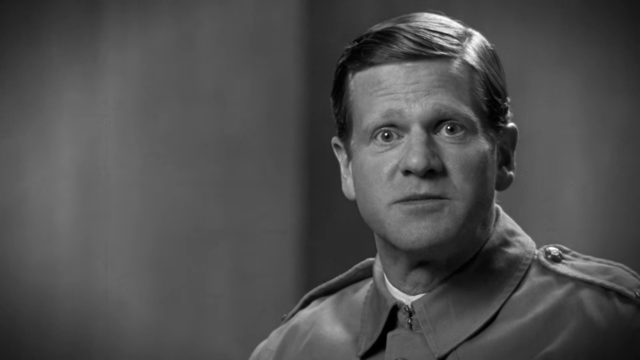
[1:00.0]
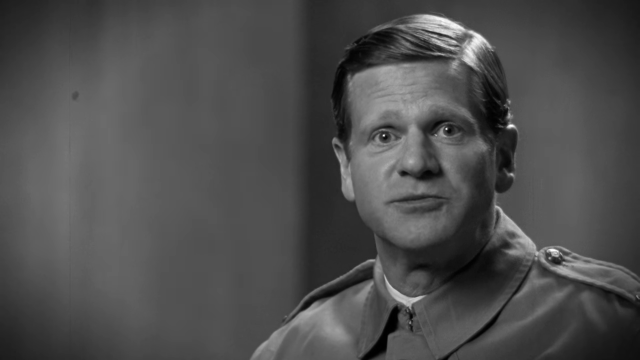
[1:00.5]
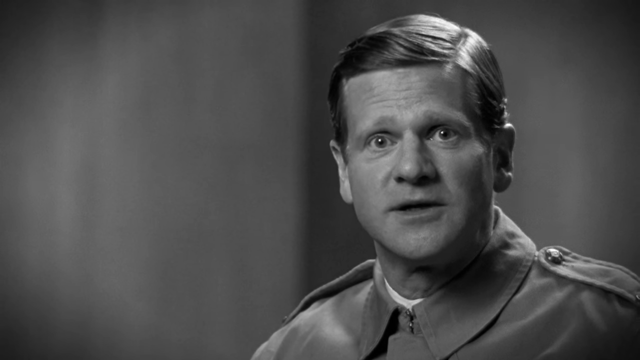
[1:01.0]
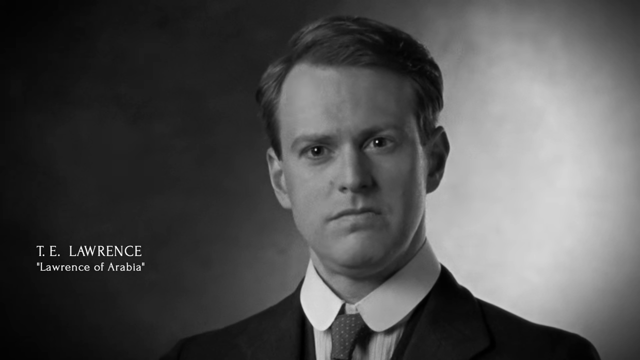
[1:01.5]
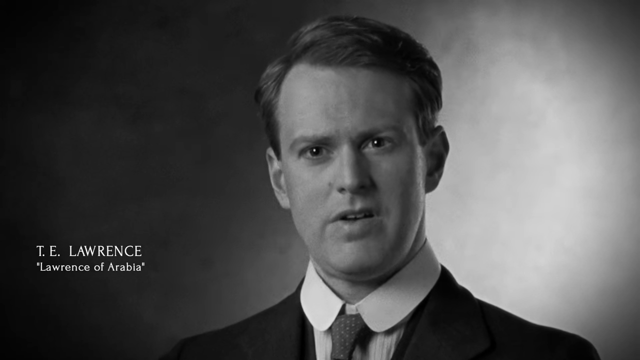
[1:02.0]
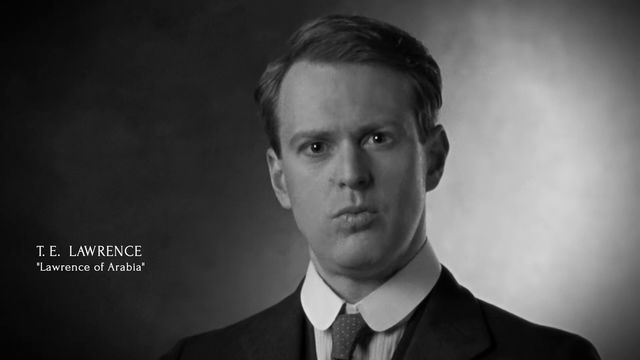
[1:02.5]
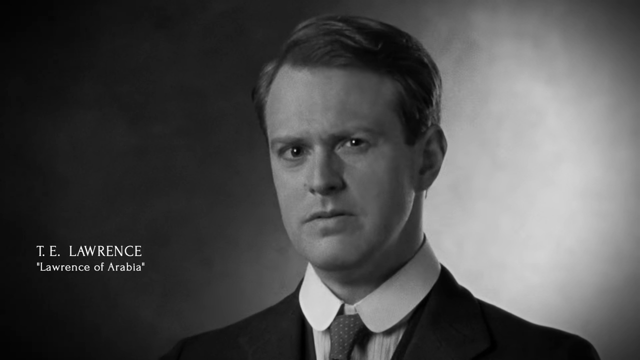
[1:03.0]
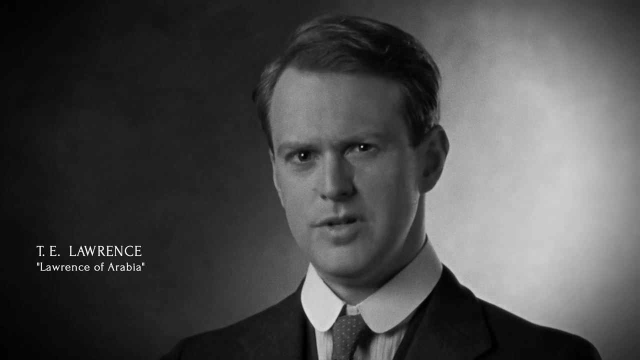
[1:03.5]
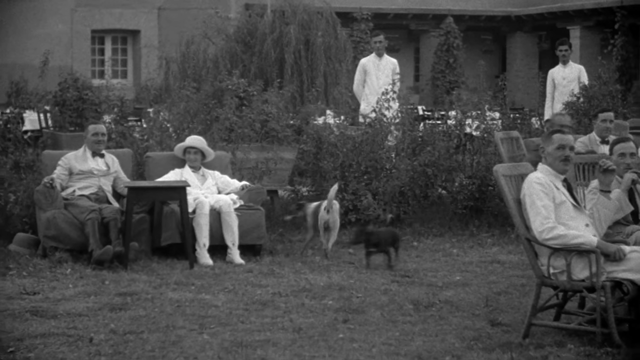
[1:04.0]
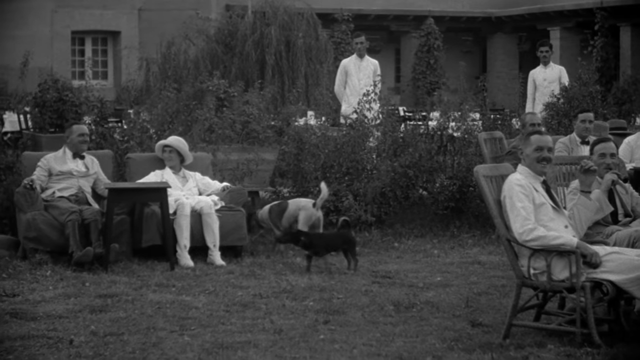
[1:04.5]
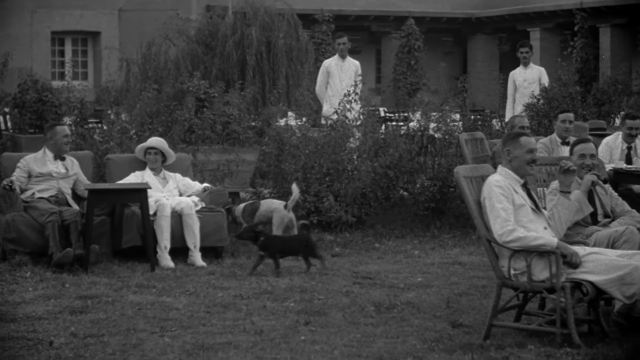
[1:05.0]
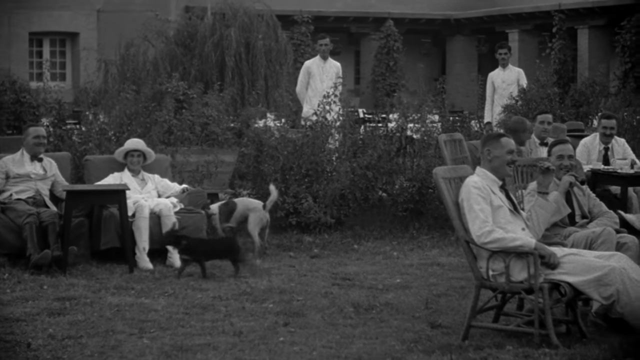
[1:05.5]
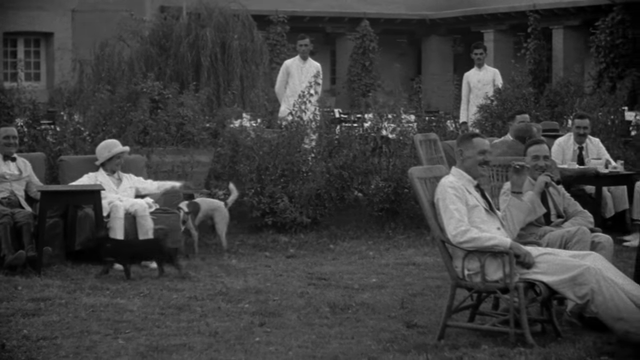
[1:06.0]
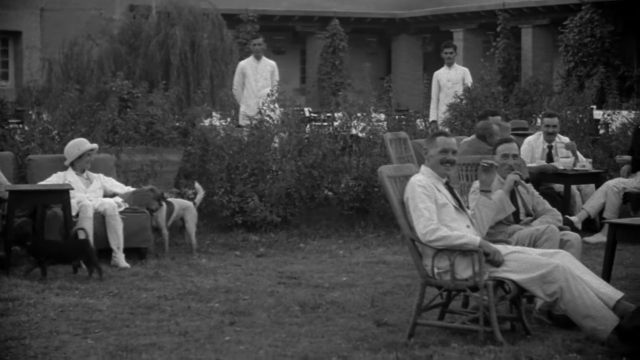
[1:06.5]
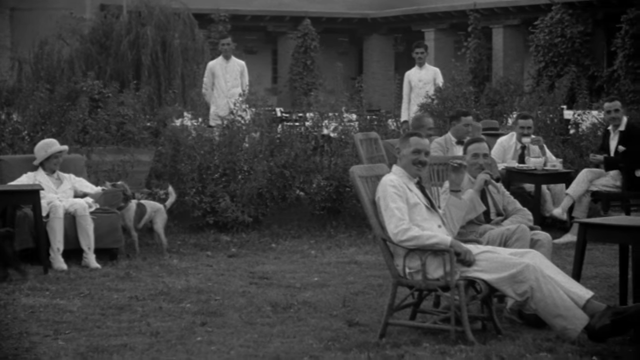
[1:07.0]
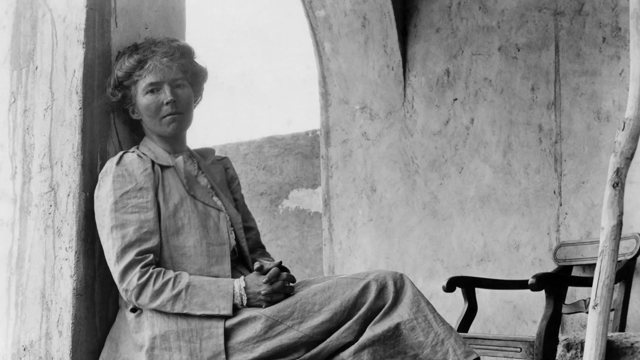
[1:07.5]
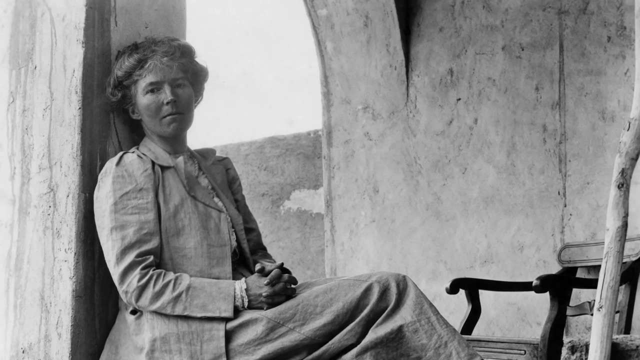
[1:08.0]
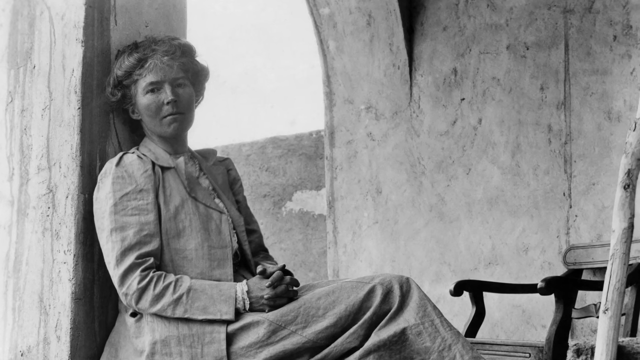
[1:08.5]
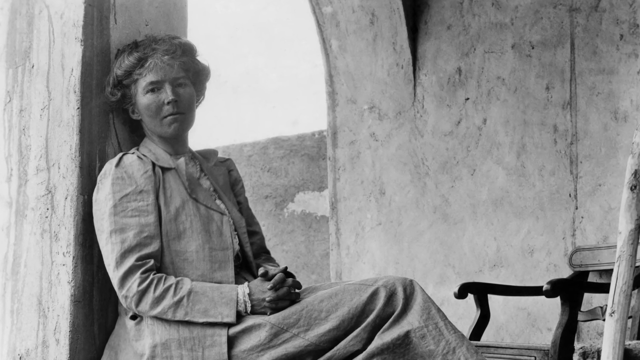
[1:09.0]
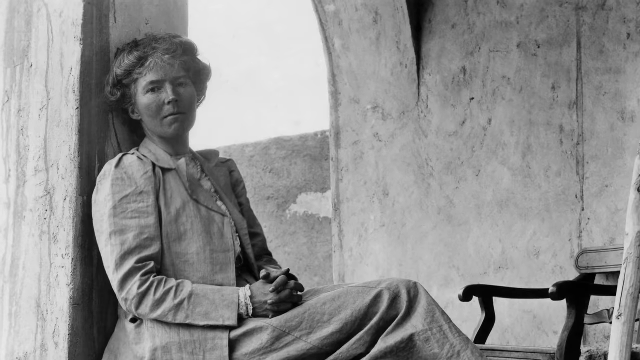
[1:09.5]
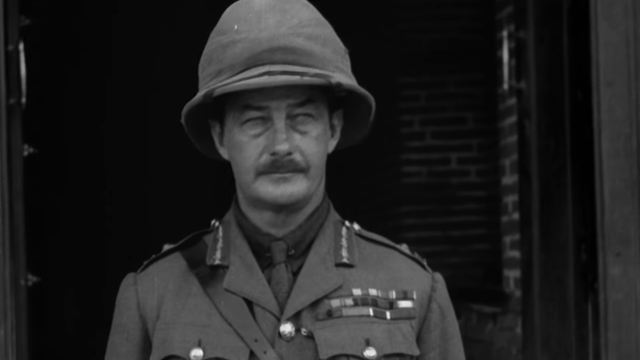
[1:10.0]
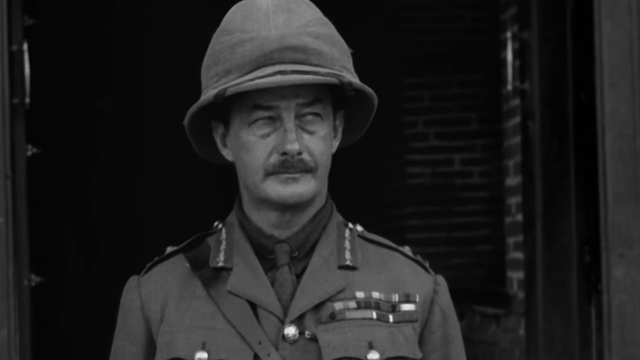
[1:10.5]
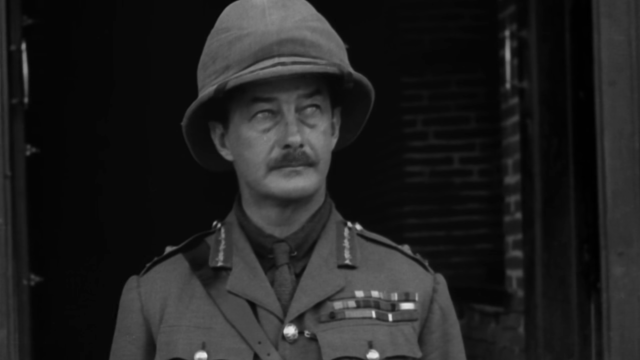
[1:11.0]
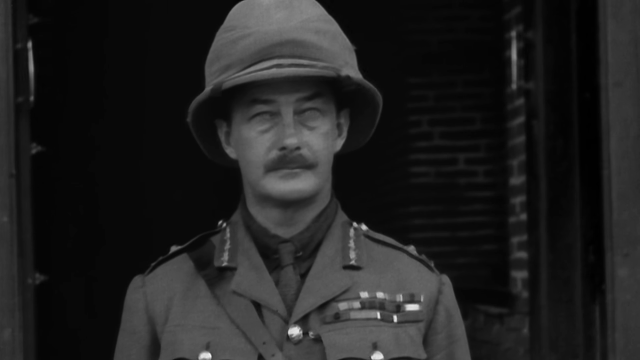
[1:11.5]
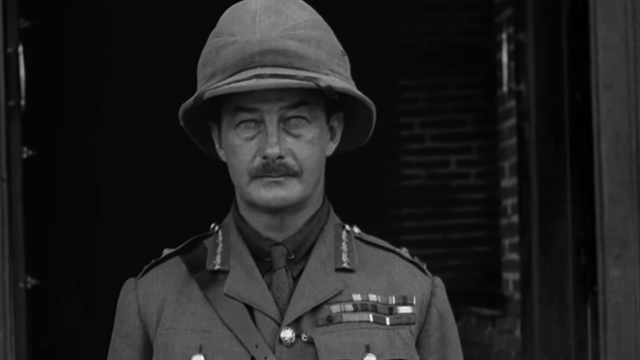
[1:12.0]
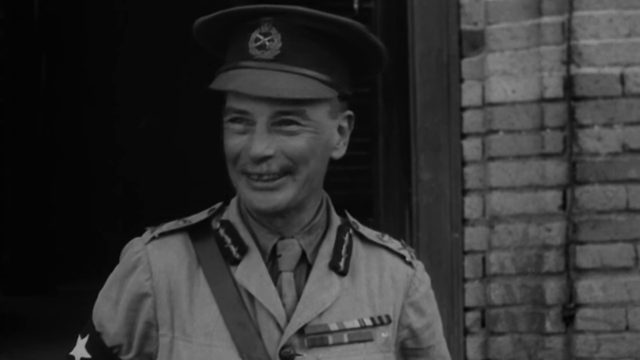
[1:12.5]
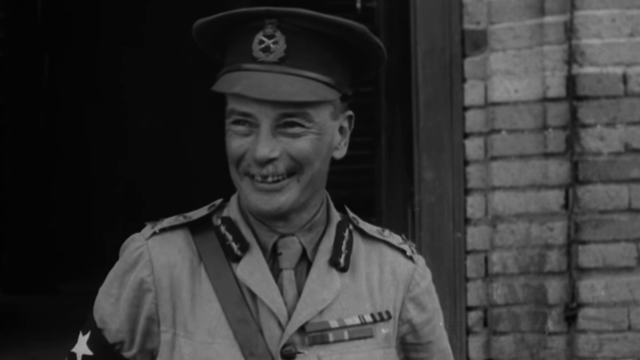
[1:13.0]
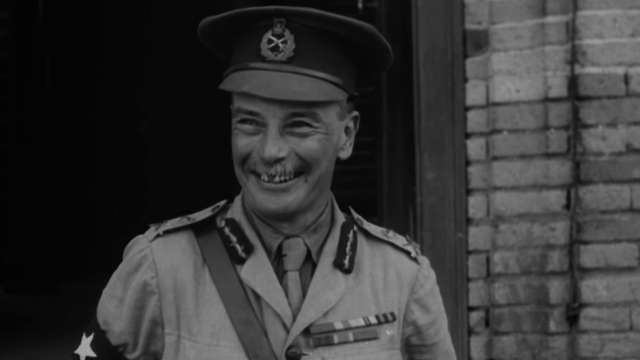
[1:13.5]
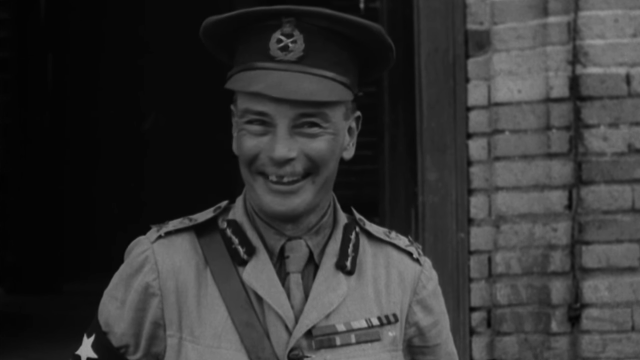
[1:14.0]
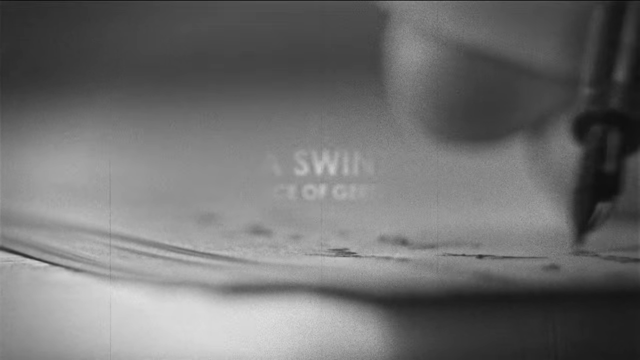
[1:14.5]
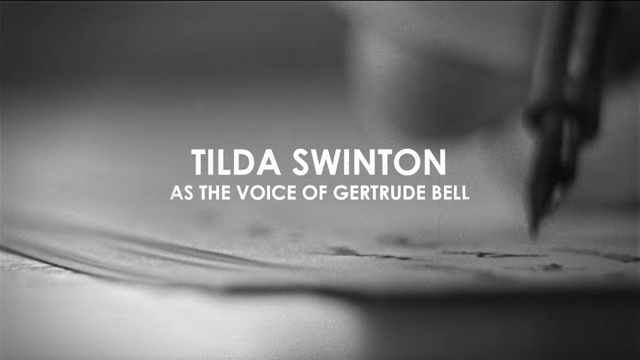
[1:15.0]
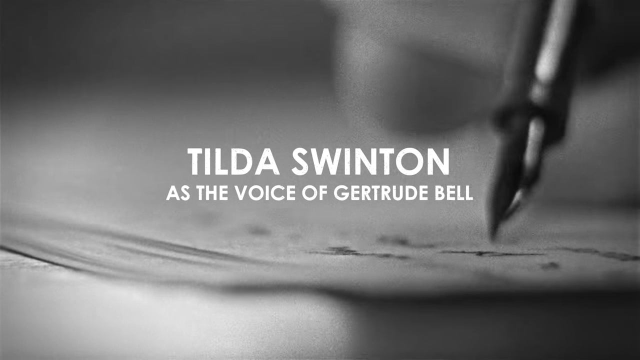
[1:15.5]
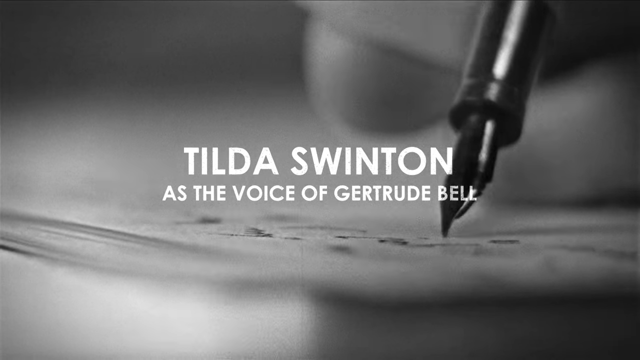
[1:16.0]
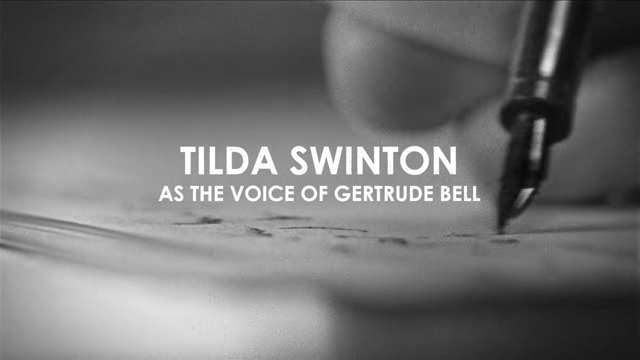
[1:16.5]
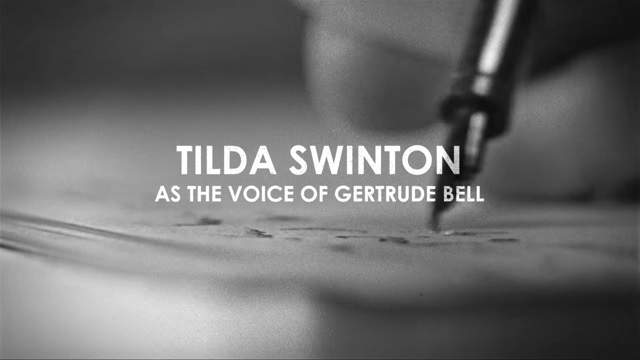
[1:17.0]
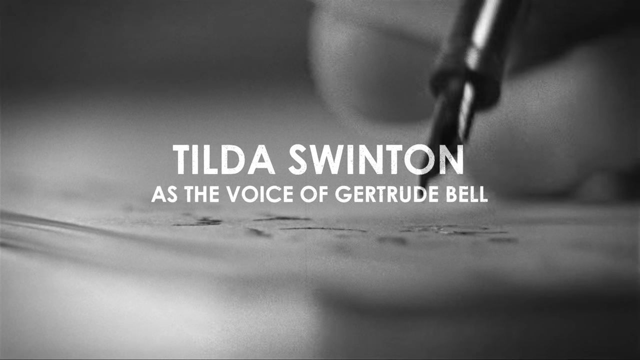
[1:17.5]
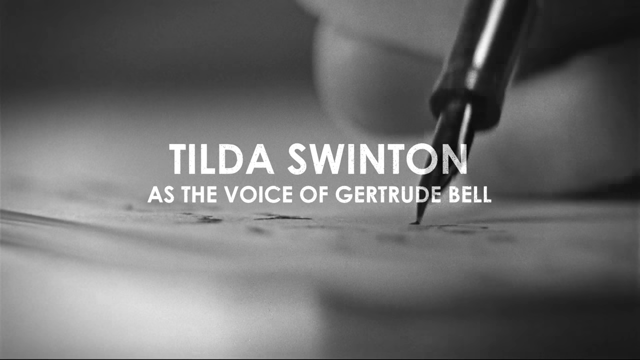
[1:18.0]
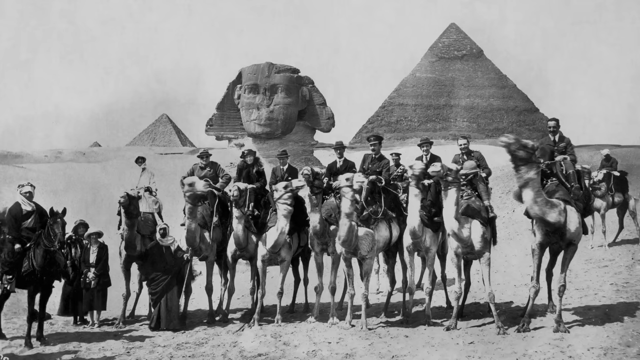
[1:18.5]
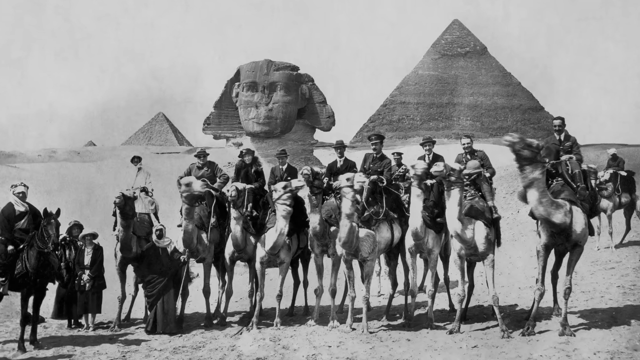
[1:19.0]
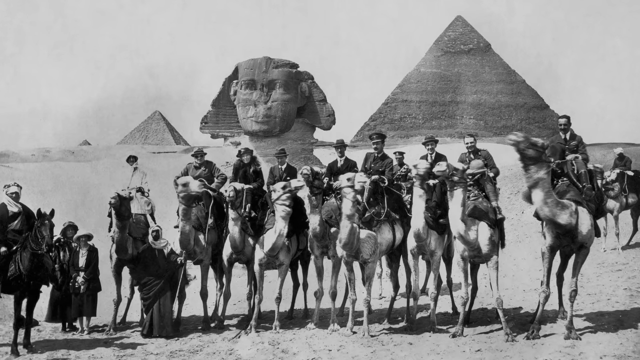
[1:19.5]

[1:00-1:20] The scene shows what appear to be characters, or actors playing characters, in a film; one is named T.E. Lawrence, who played Lawrence of Arabia. Next is what appears to be old footage of people socializing in a garden of some sort, possibly off the back of a home. There is one woman and the rest are men; they sit on chairs, smiling and conversing, while dogs walk around. Then a lone woman appears to be sitting on a windowsill with an archway above her, staring into the camera. She has blonde, wiry hair and is dressed modestly in a jacket that covers everything up to her neck and a long skirt. A couple of British soldiers stand chuckling, almost as if they don't know the camera is there. The tip of an ink pen like a quill, with a very fine point, appears alongside text reading "Tilda Swinton as the voice of Gertrude Bell." Finally, people ride on the backs of camels at the site of ancient Egyptian ruins with a pyramid and a sphinx.